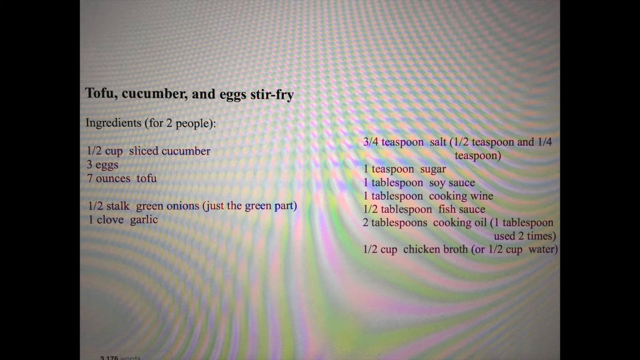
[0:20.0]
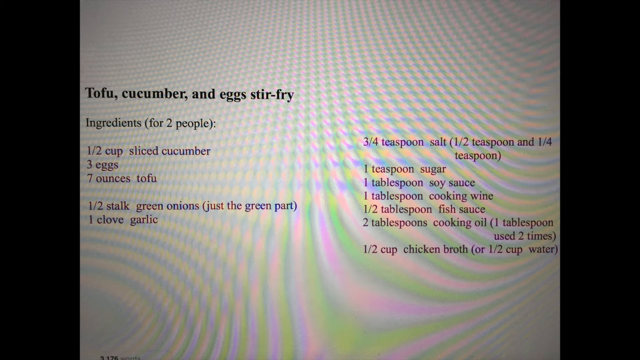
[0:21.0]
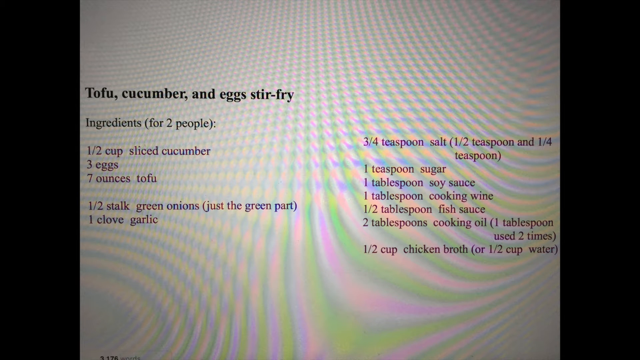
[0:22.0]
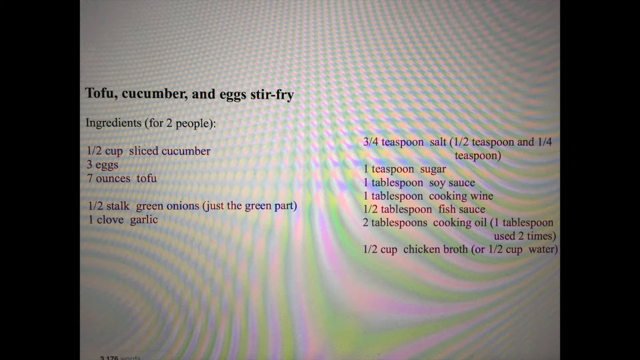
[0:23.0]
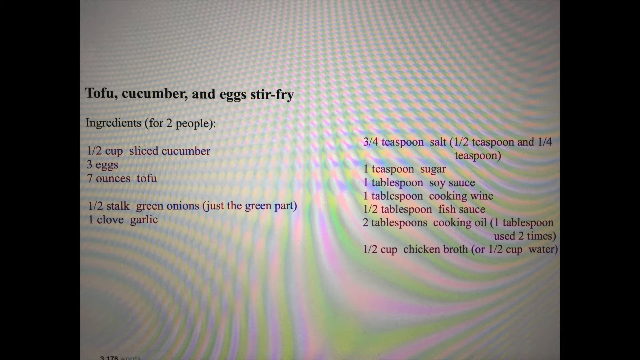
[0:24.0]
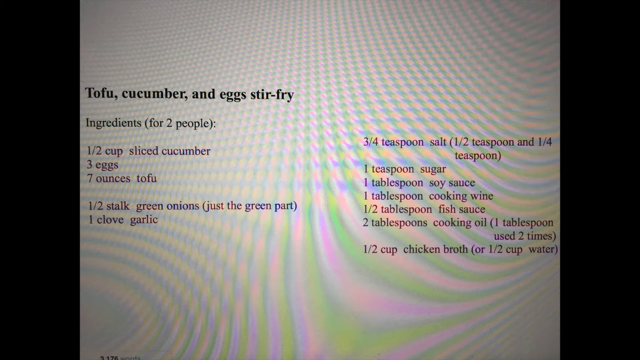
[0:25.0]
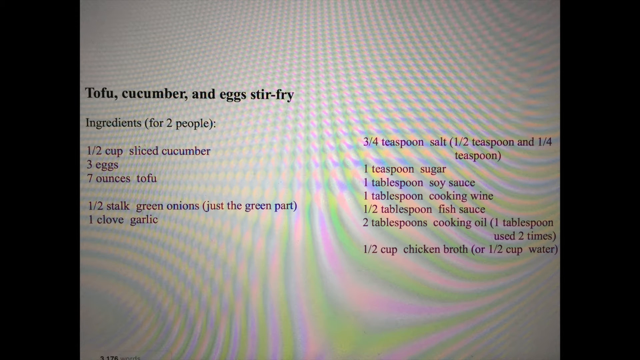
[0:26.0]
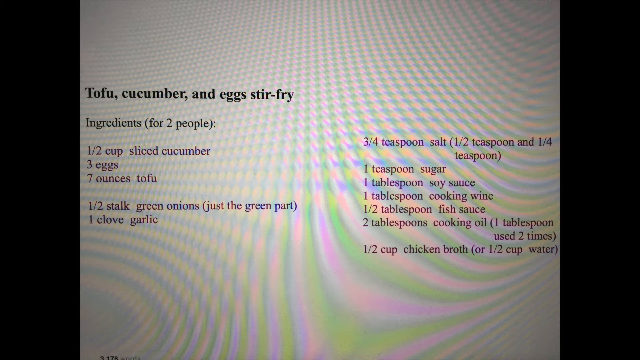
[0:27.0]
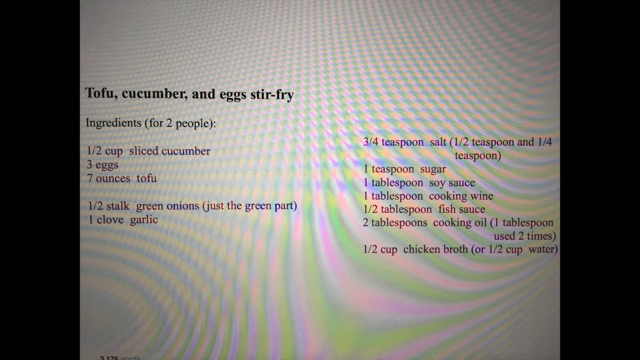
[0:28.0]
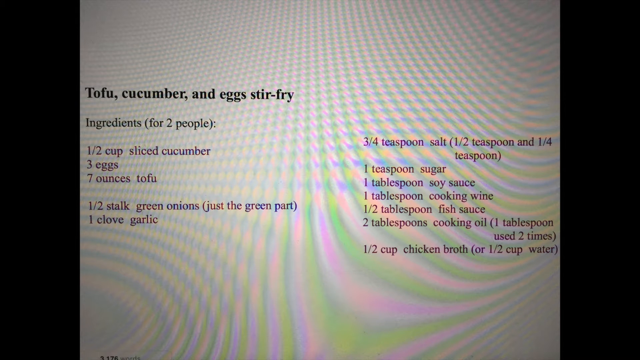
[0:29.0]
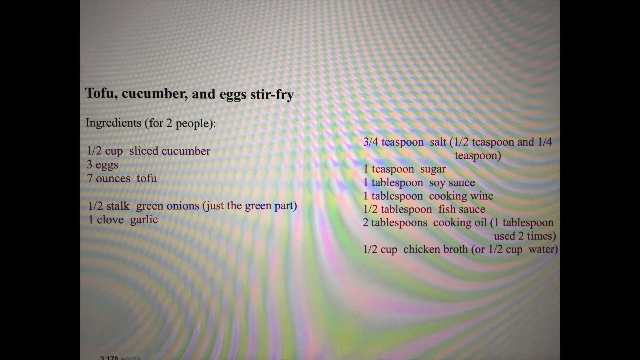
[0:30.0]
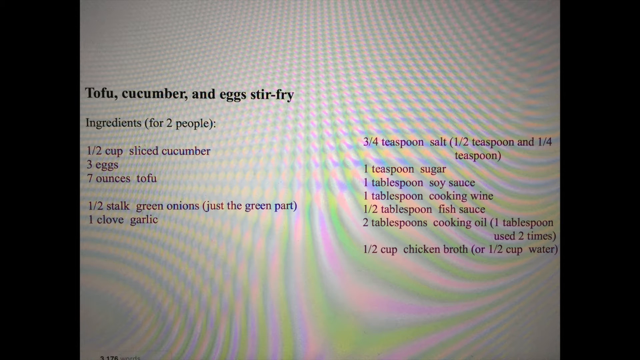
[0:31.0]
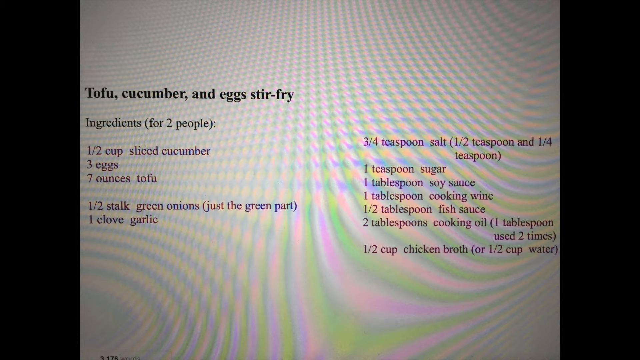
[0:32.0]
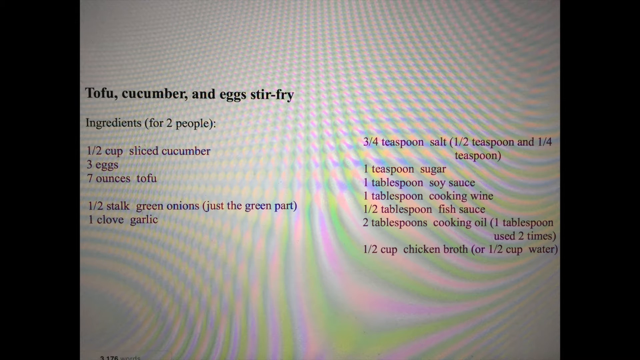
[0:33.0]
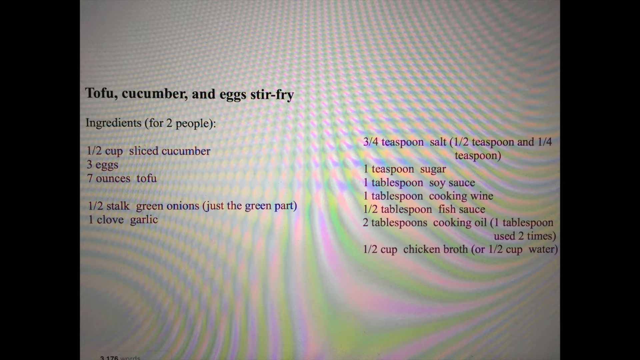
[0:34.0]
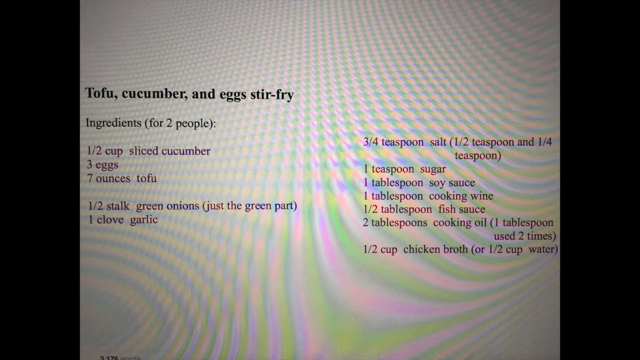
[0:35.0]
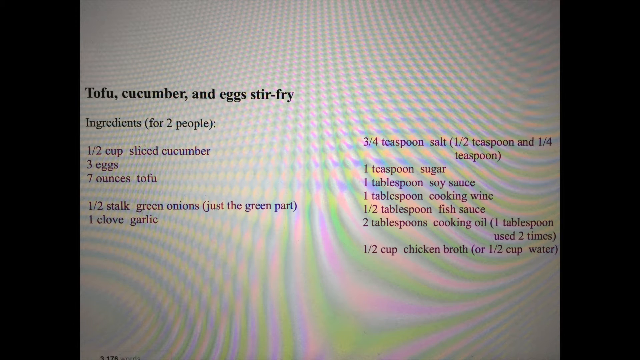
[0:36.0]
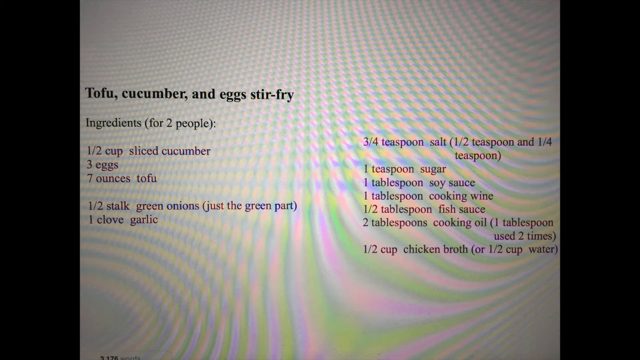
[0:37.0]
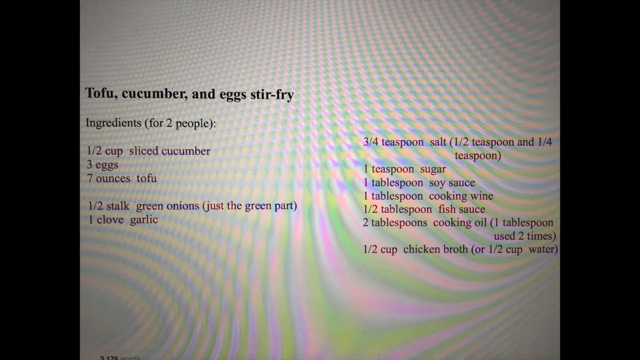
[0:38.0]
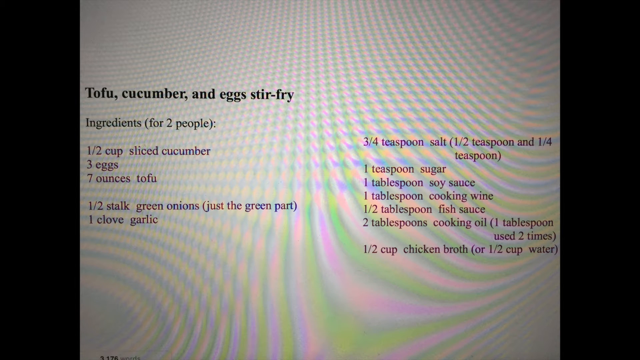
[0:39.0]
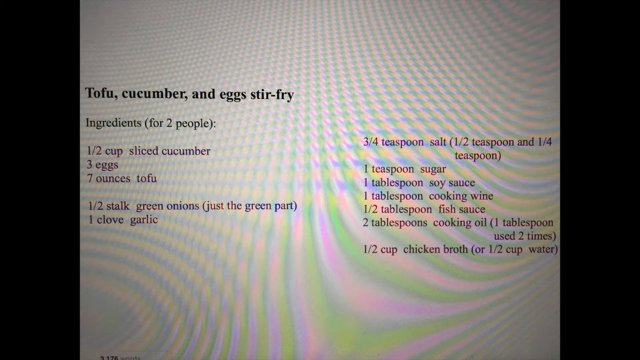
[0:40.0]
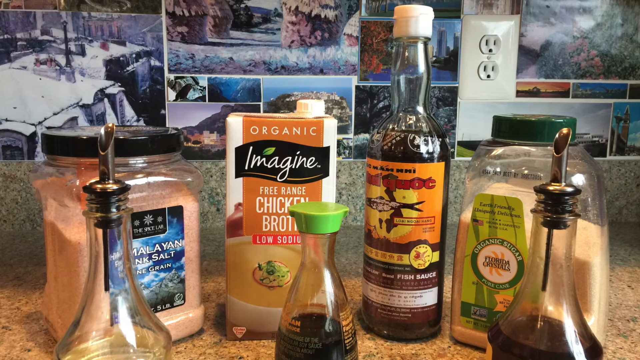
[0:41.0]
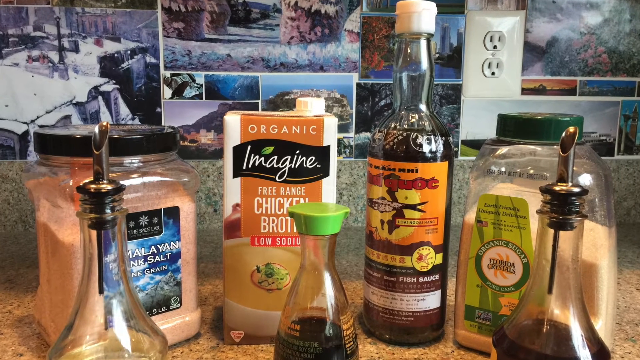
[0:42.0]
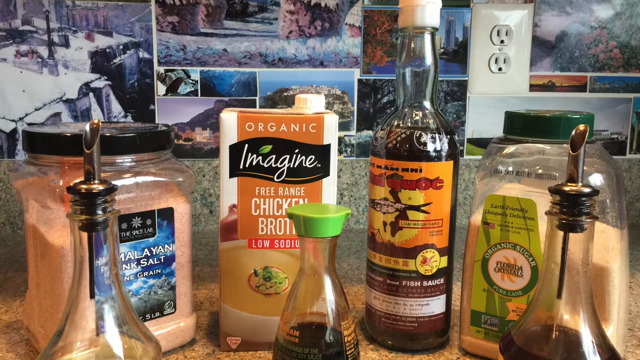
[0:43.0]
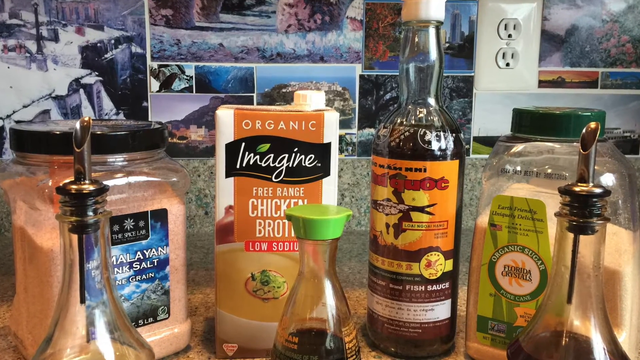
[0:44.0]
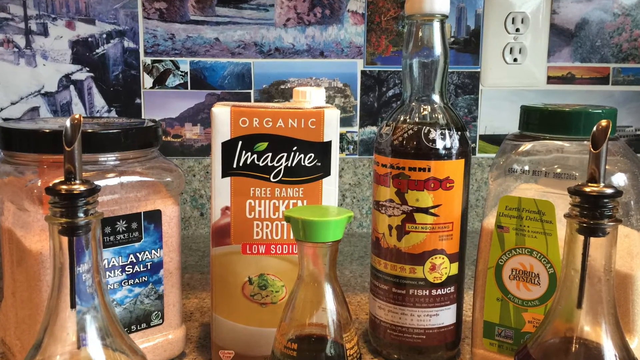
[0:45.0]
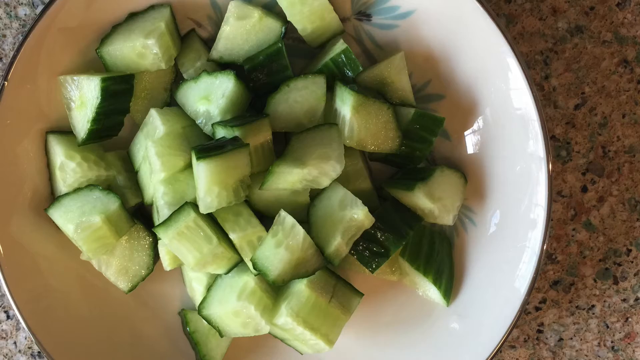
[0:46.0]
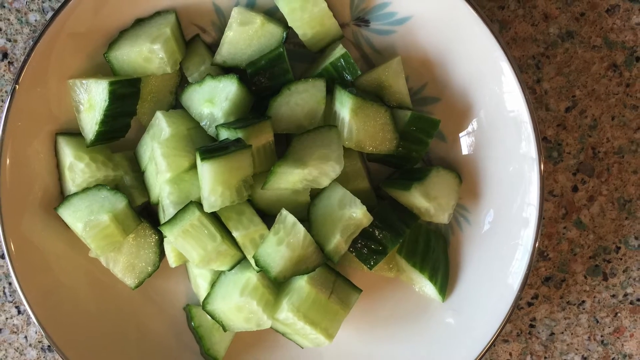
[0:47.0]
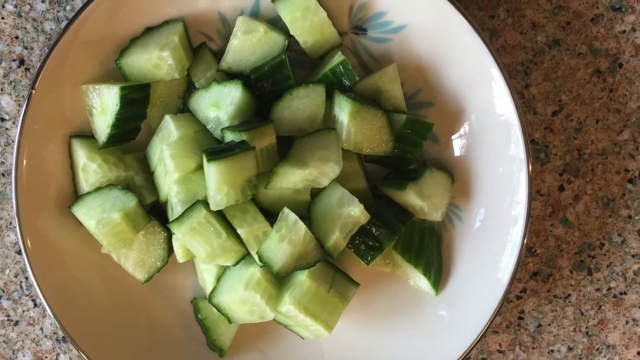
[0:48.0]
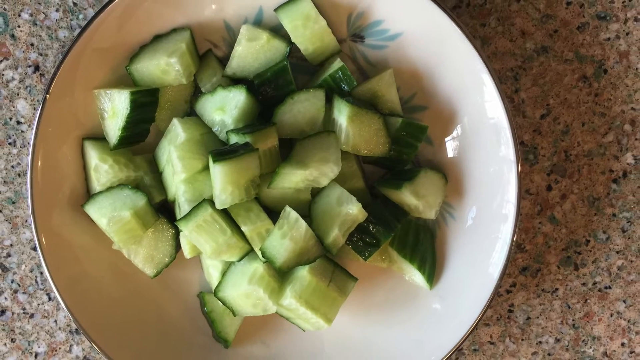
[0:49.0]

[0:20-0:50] The recipe text is all the same style apart from the bold title and is aligned to the left edge, about five or six entries down. The title is typed on one line, and probably a couple of lines down it says "ingredients (for two people):". Probably two more lines down come "half cup sliced cucumber", then "three eggs", then "seven ounce of tofu". After some white space, probably two or three entries, comes "one half stock green onions (just the green part)" and underneath it "one clove of garlic". Another column lists "three quarter teaspoon of salt" and the teaspoon and tablespoon amounts of the other items, apparently about six different teaspoon amounts on the right side. The video then shows the things needed: Himalayan pink salt in a clear container with a black lid; to the right a carton of chicken broth that says "organic", with a green leaf; to the right of that, fish sauce in a long clear bottle with a white cap; and to the right of that, a large tub with a green lid that has almost a handle on its right side. They are on a counter. The back wall behind them appears to have tiles that look like nature photos, showing bluffs and snow. Next comes a plate with some of the cucumbers diced up on their own, not mixed, and then a similar arrangement of tofu, which looks almost like little cubes of cheese.